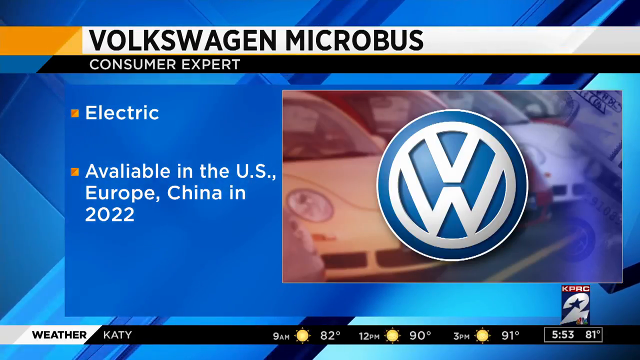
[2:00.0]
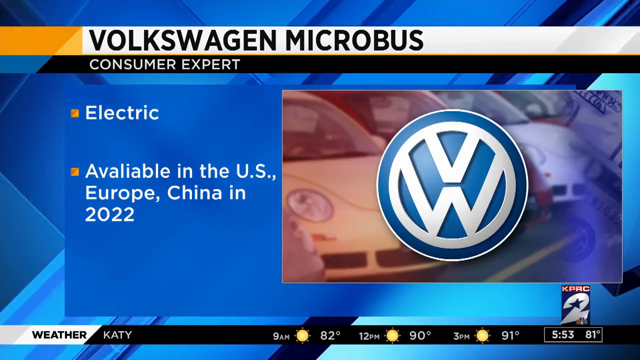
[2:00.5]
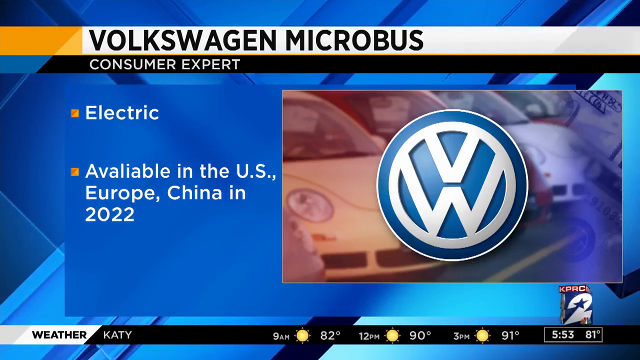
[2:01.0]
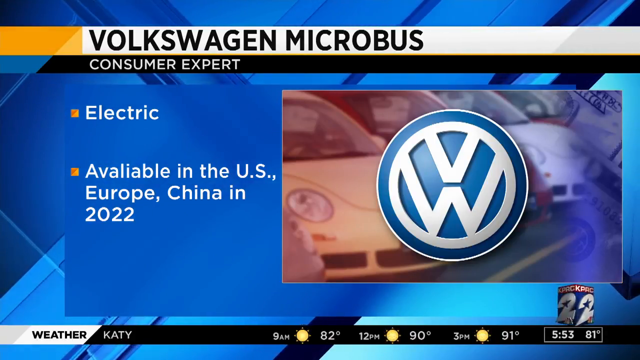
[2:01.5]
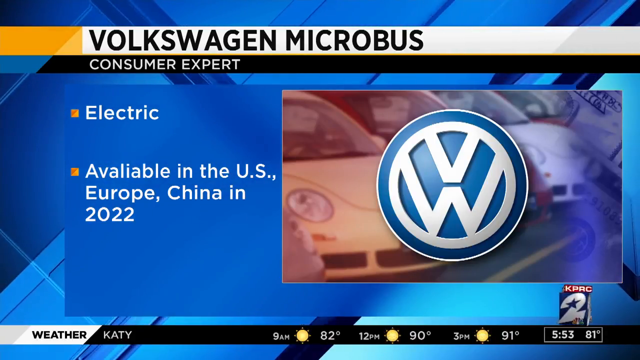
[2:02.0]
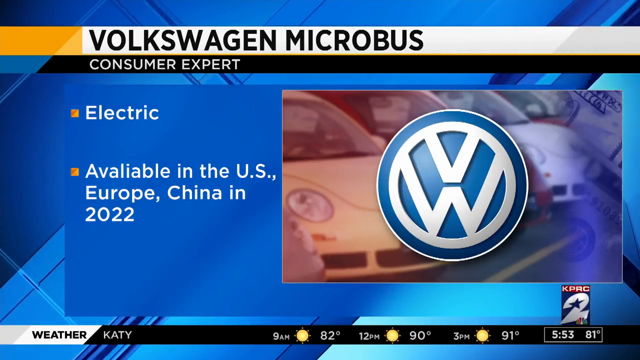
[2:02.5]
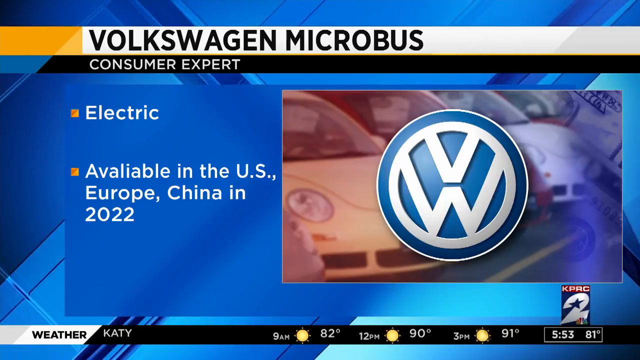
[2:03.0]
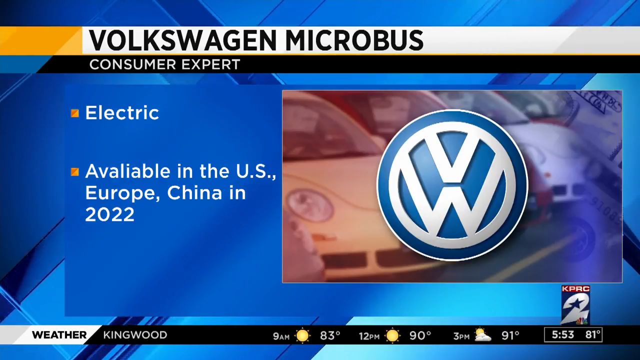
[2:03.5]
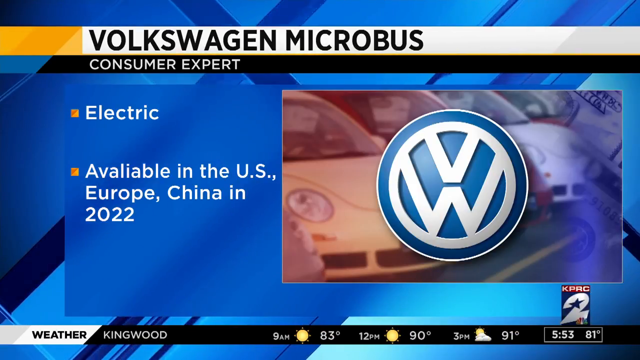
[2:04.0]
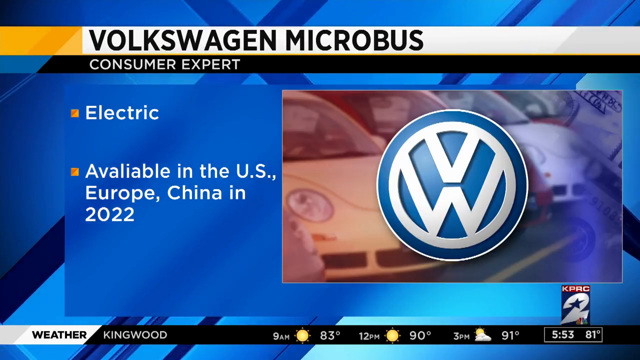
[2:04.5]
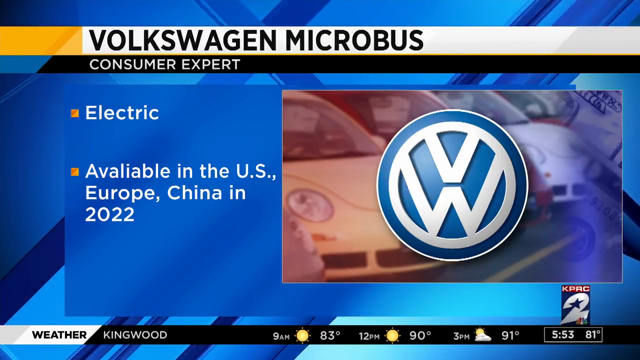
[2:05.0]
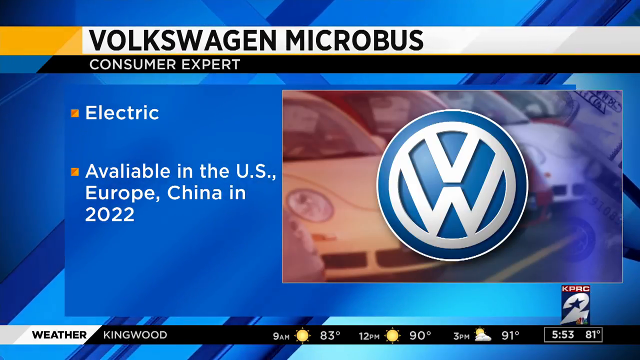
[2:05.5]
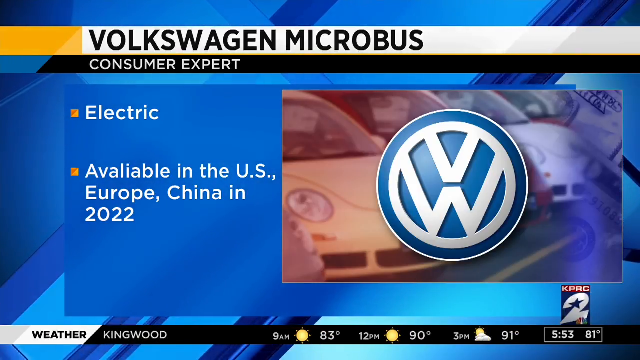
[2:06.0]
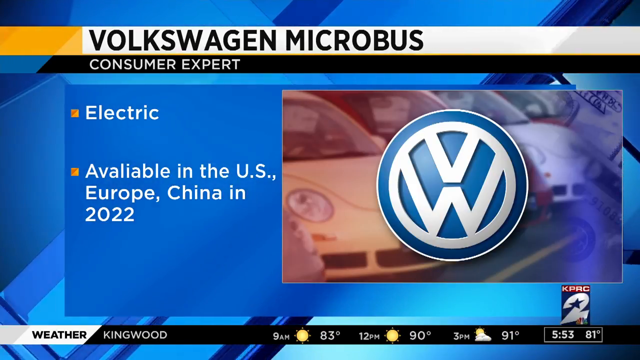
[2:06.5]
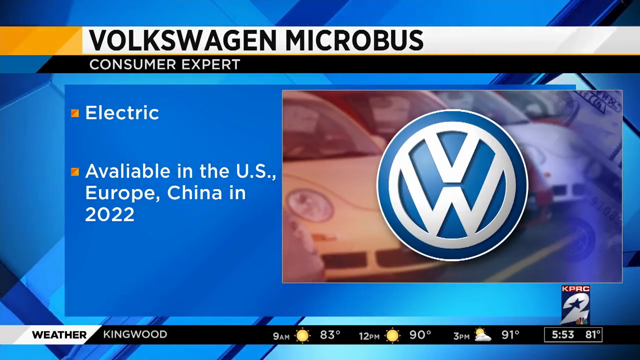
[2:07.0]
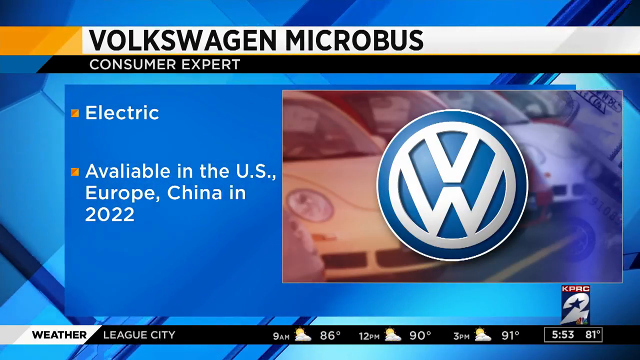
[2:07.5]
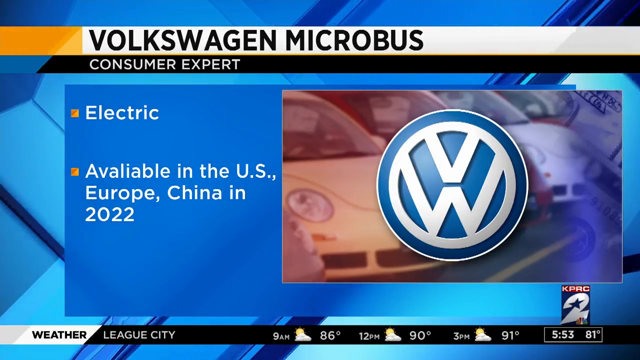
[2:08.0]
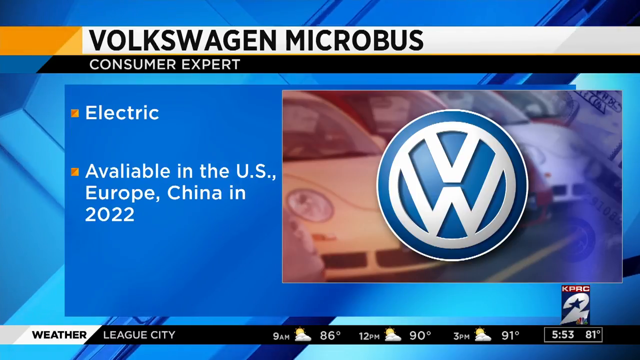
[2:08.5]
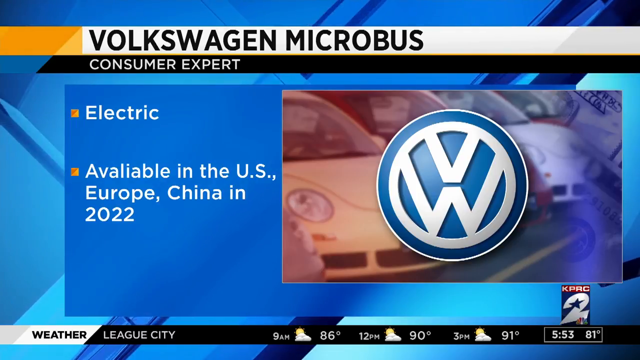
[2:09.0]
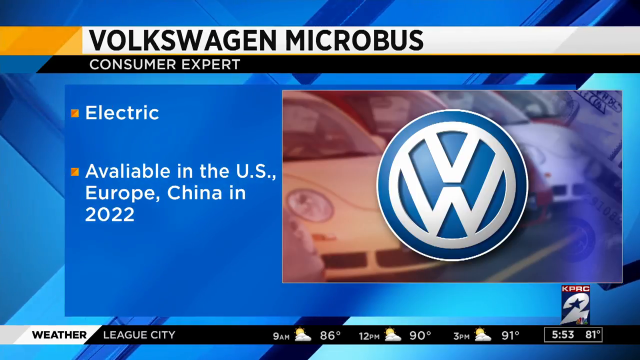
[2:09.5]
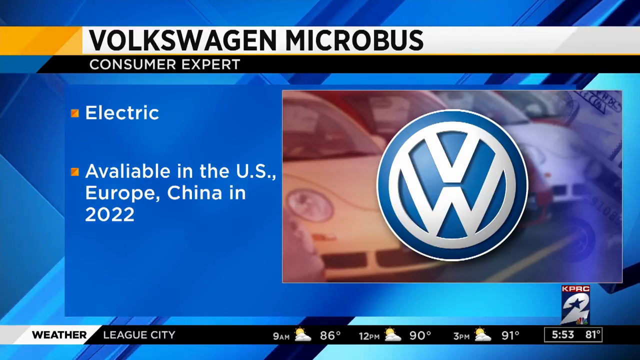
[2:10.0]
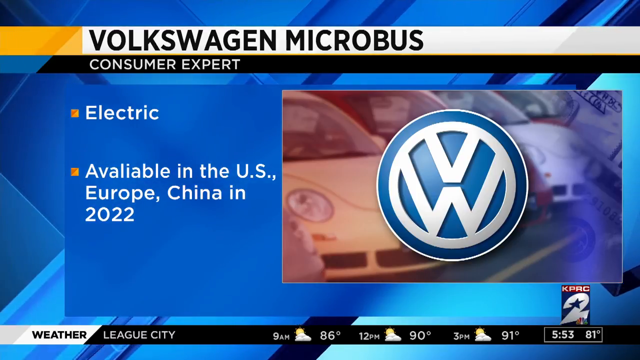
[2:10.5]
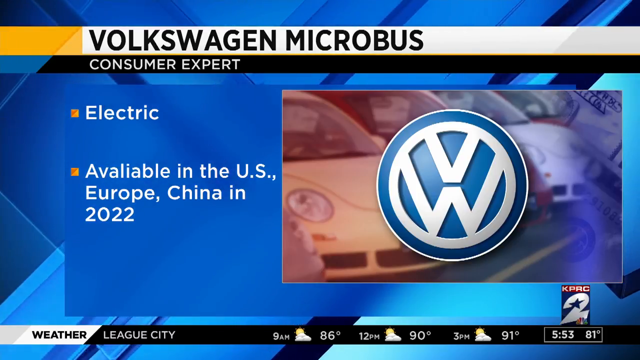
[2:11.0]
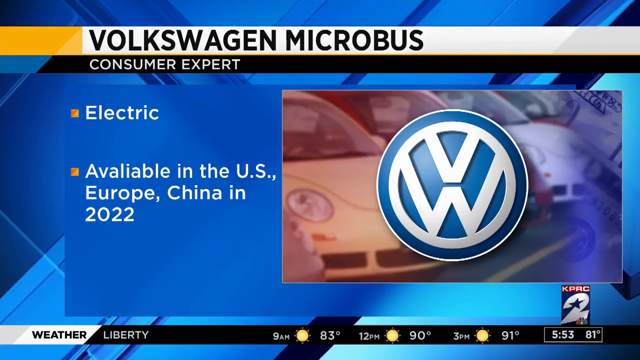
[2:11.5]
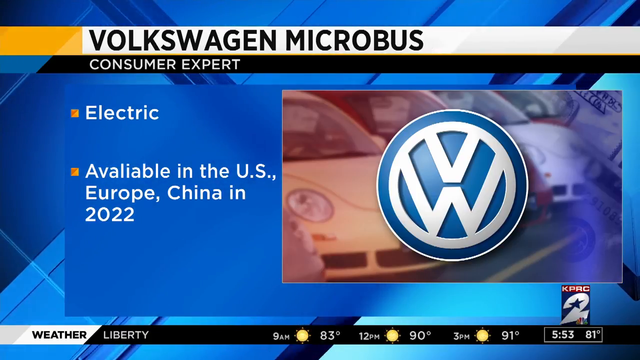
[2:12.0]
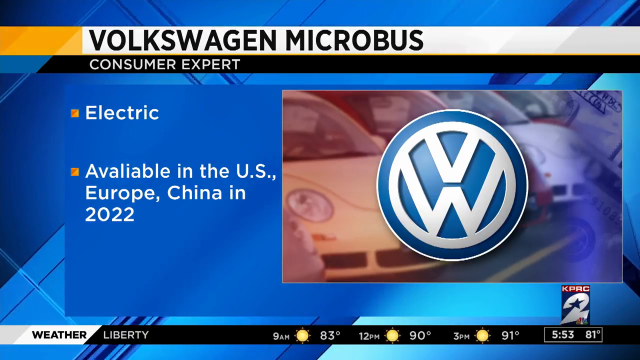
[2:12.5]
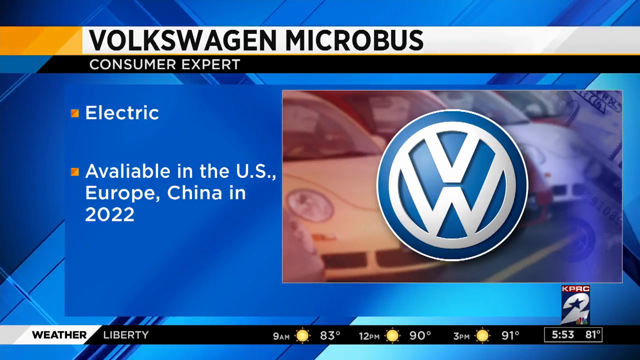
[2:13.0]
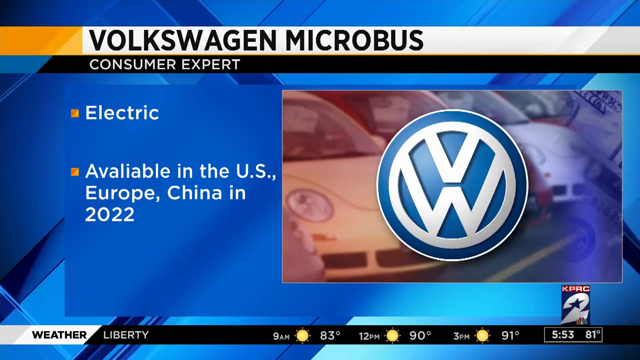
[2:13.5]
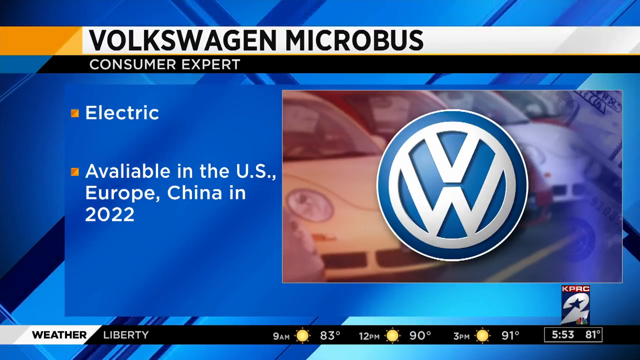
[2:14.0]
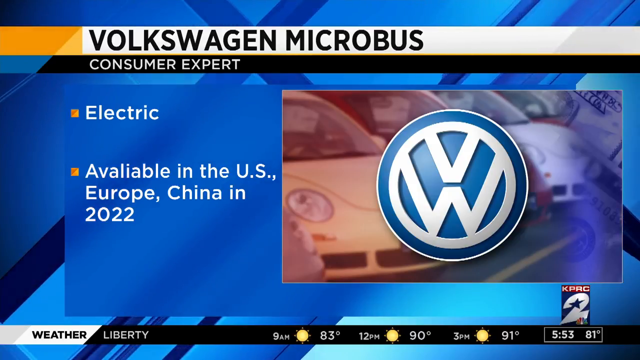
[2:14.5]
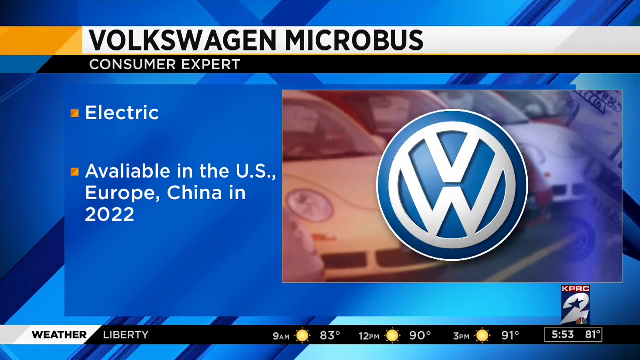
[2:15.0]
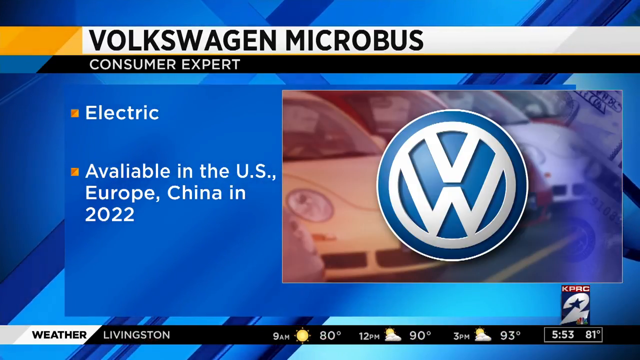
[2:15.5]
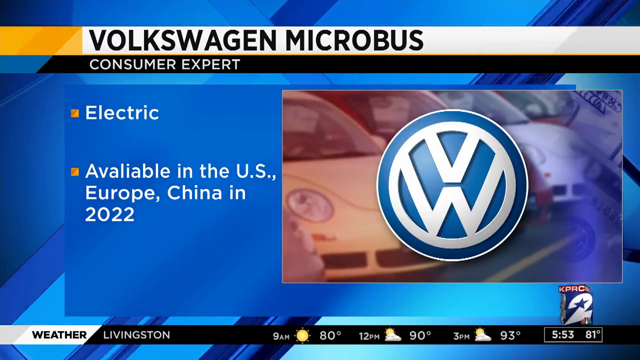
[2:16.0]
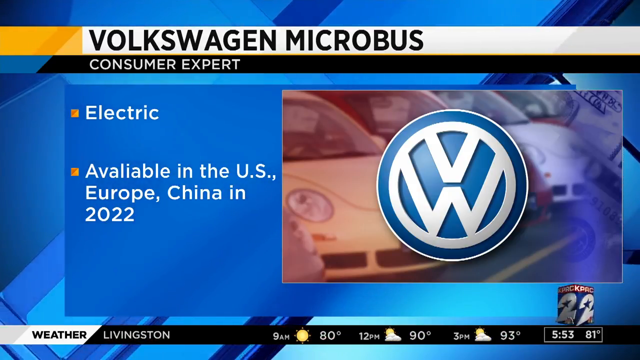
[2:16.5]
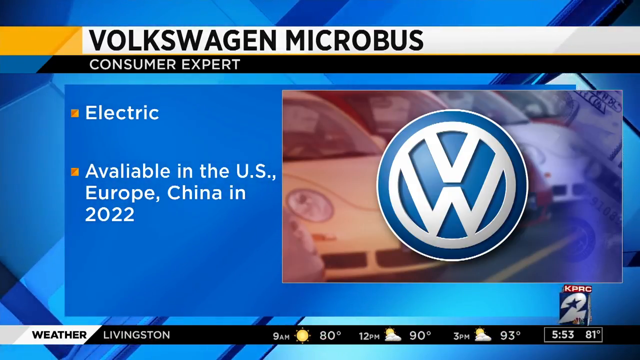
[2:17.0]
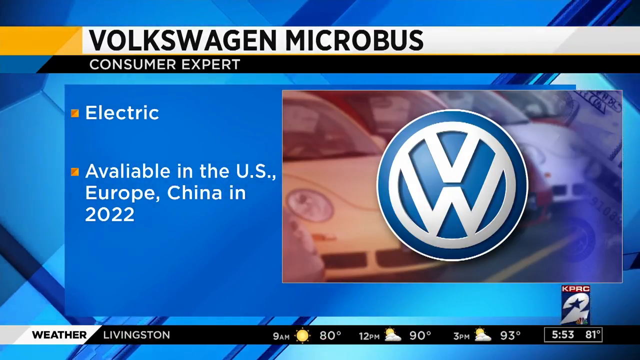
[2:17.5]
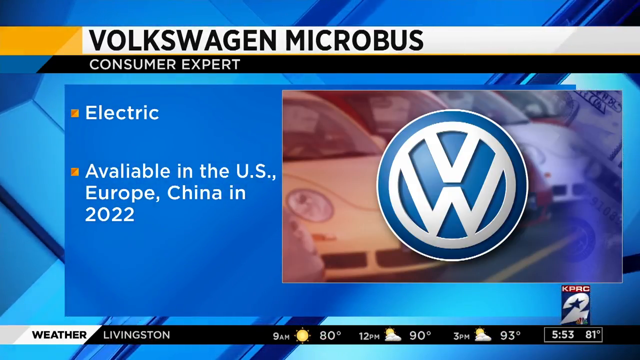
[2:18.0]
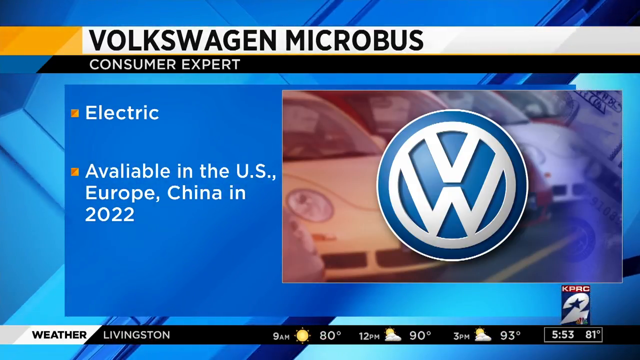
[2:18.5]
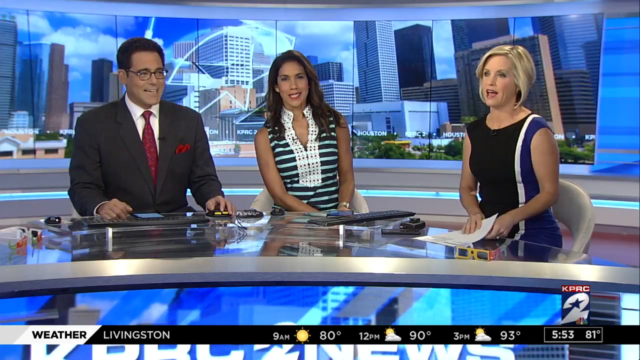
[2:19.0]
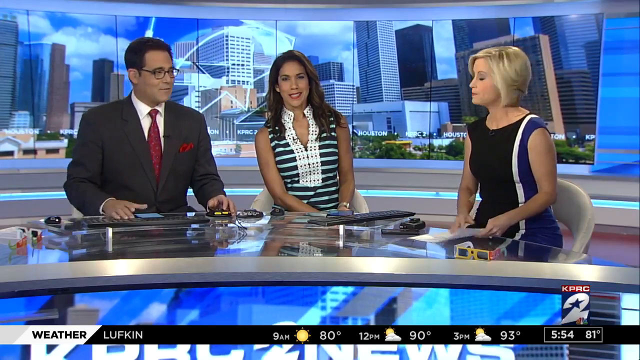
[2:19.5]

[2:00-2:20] "VOLKSWAGEN MICROBUS" is written at the top of the screen, with "Consumer Expert" below it and two bullet points: "Electric" and "Available in the US, Europe, China in 2022". On the right side of the screen, in a rectangle, the VW logo is displayed in blue and white in a circle. A few VWs are displayed, including a yellow Beetle and a silver Beetle among other colours. At the bottom of the screen is the weather forecast: for Kingwood, 83 degrees at 9 AM, 90 degrees at 12 PM and 91 degrees at 3 PM; League City and Liberty City share the same temperatures, 86 degrees at 9 AM, 90 degrees at 12 PM and 91 degrees at 3 PM.